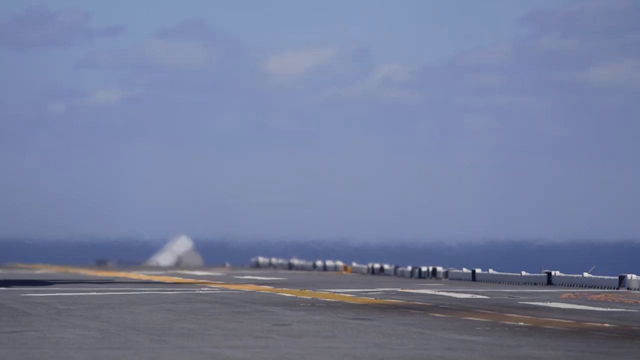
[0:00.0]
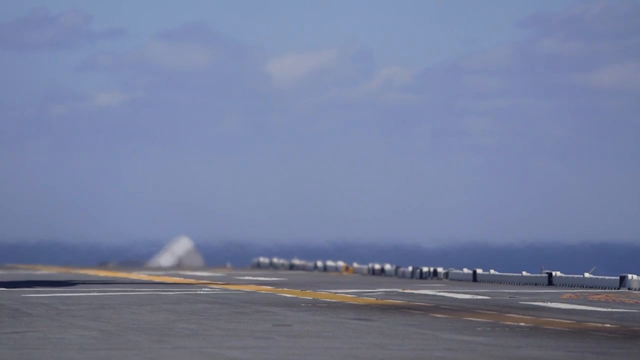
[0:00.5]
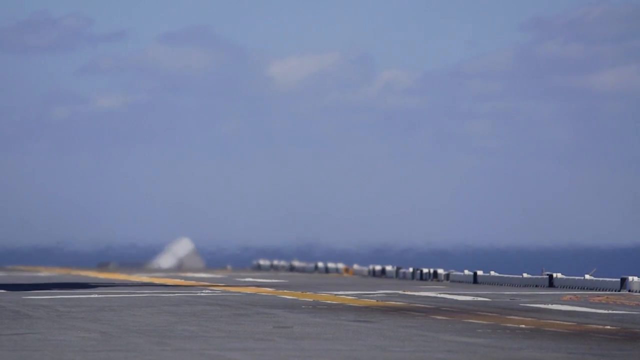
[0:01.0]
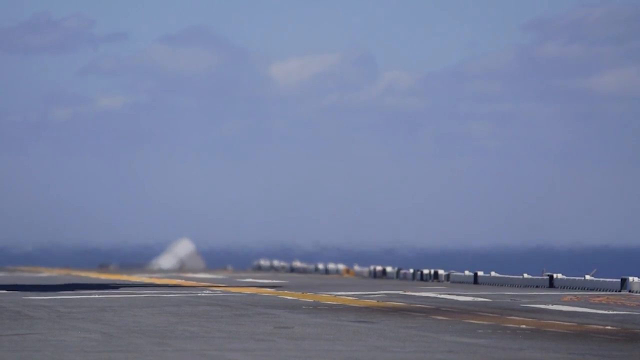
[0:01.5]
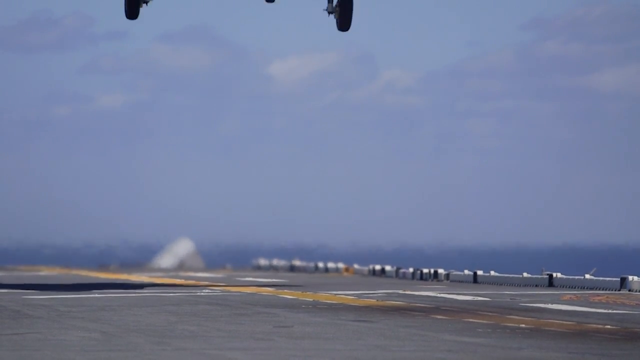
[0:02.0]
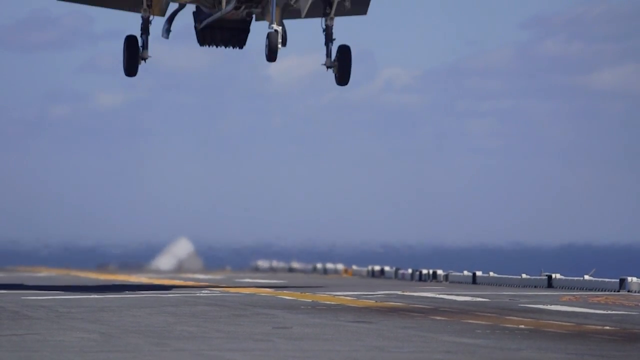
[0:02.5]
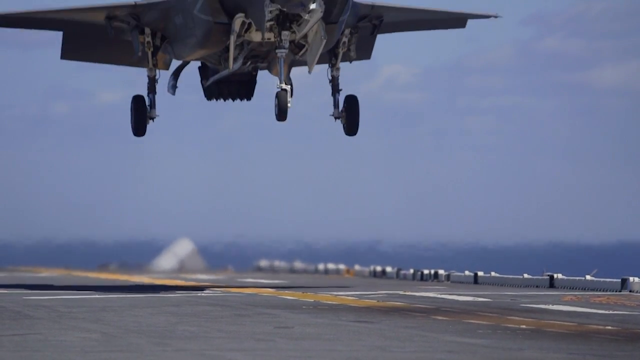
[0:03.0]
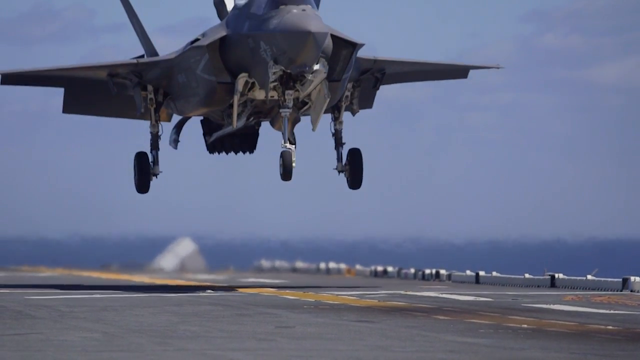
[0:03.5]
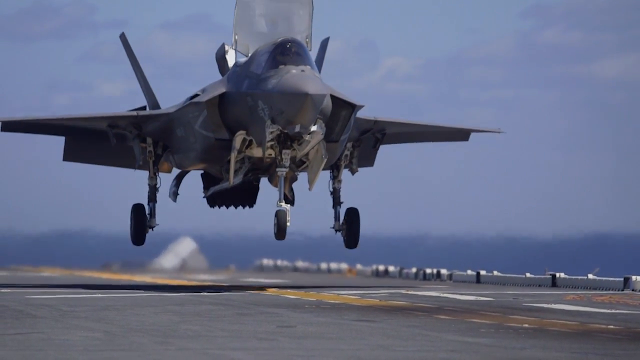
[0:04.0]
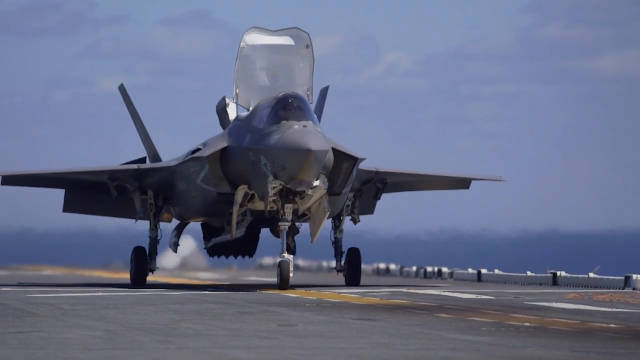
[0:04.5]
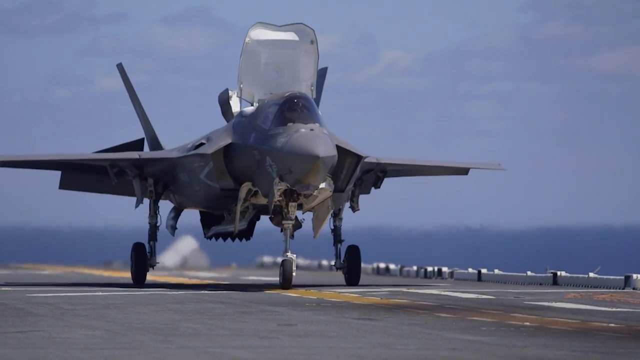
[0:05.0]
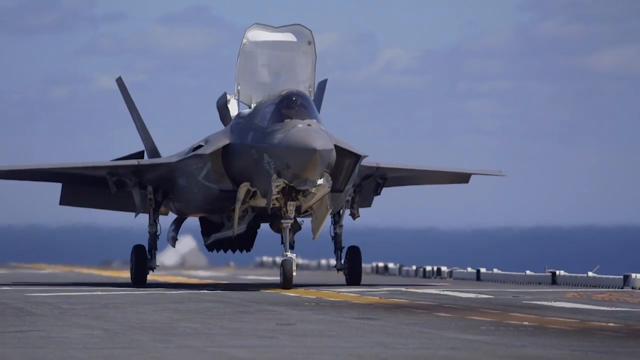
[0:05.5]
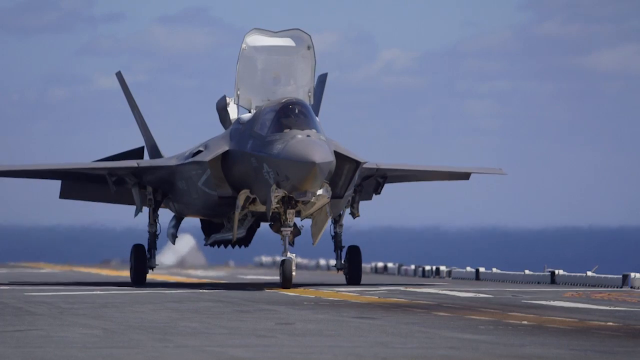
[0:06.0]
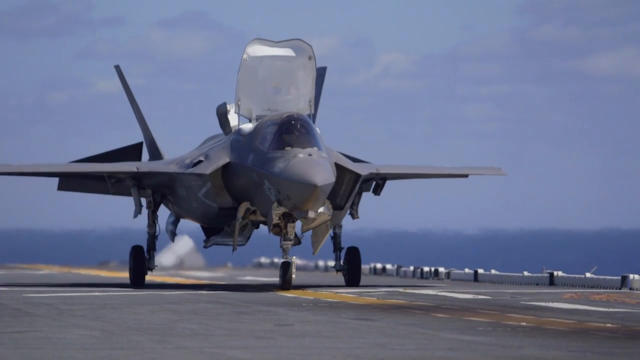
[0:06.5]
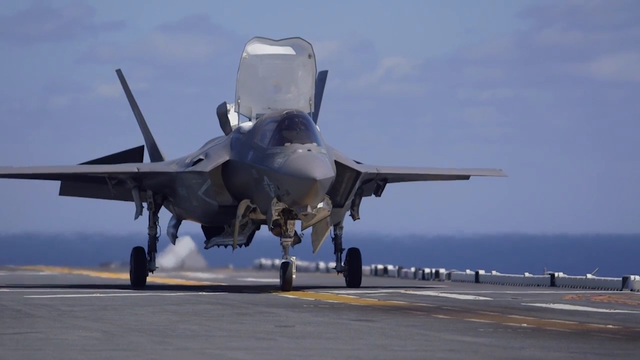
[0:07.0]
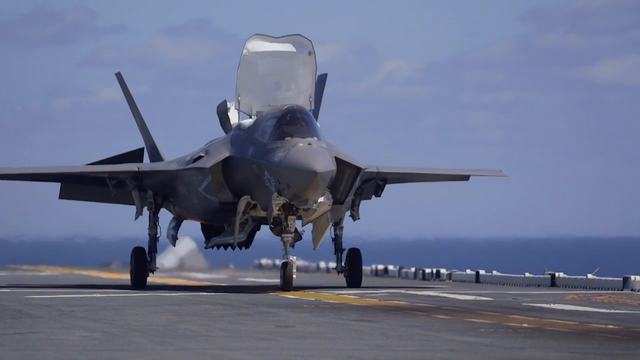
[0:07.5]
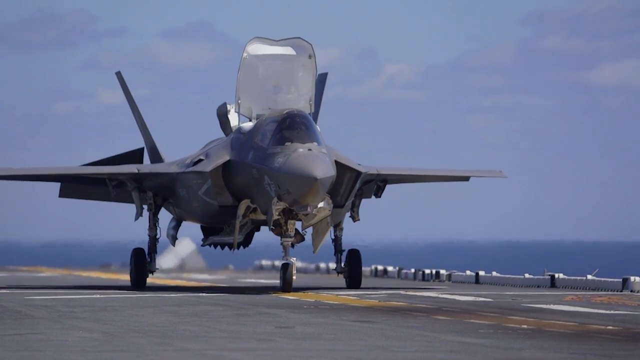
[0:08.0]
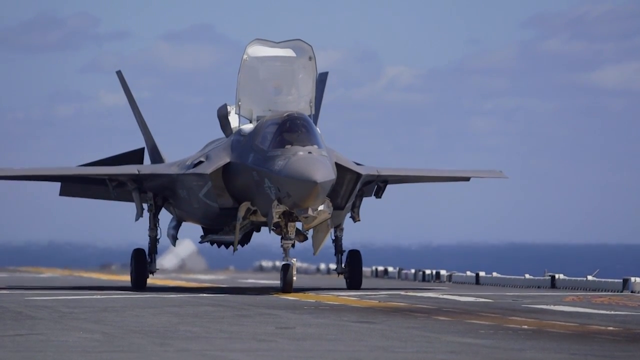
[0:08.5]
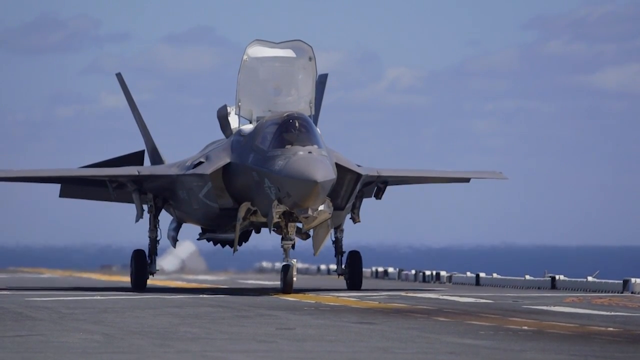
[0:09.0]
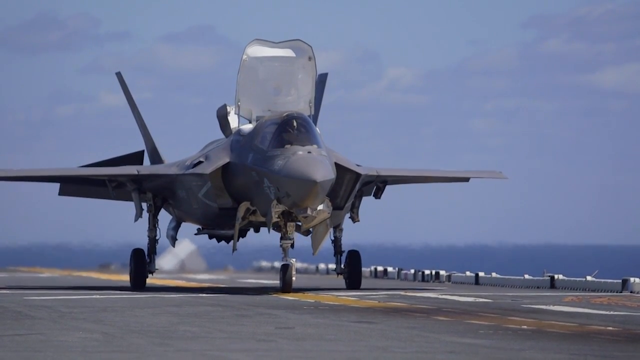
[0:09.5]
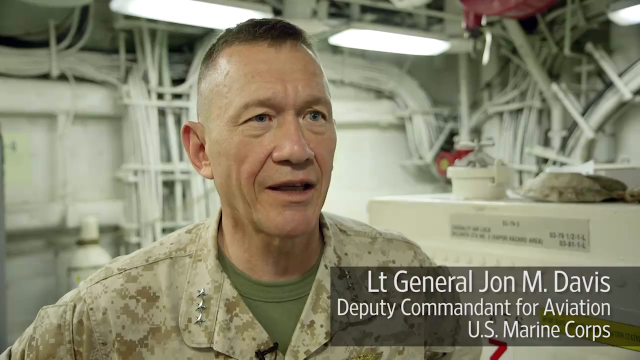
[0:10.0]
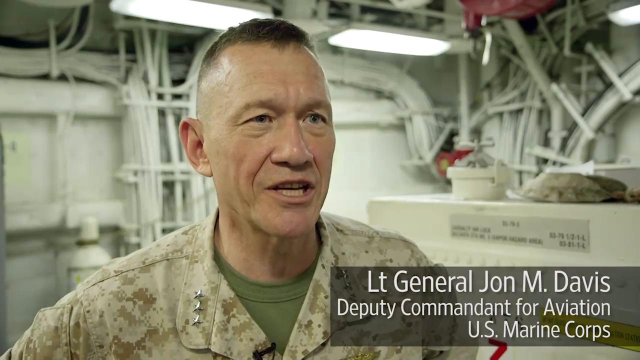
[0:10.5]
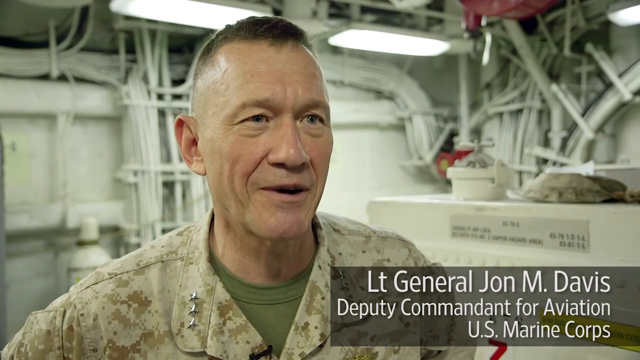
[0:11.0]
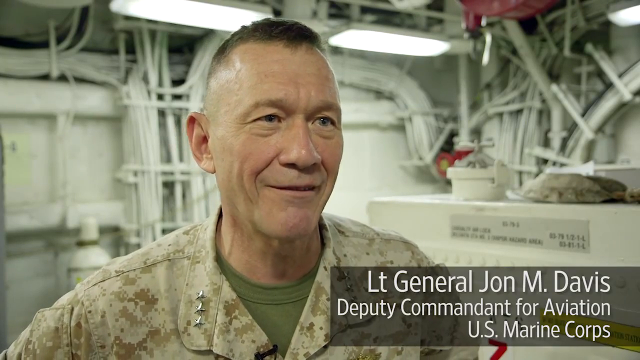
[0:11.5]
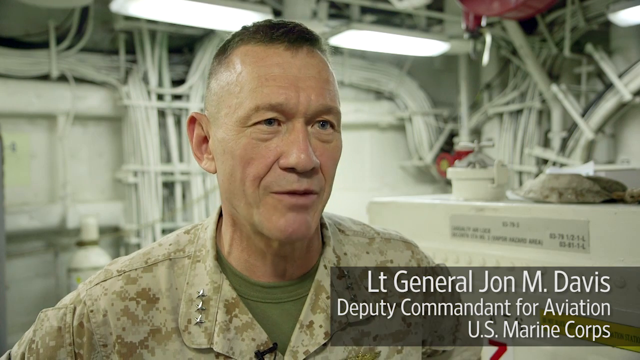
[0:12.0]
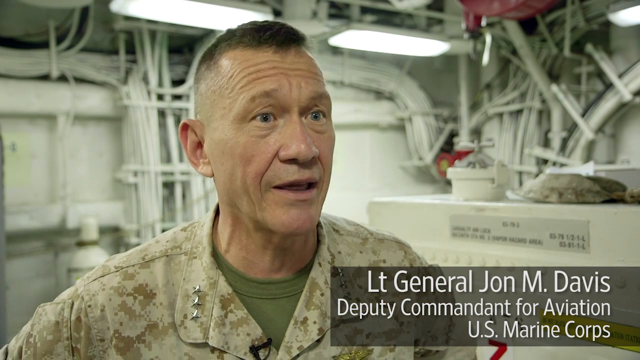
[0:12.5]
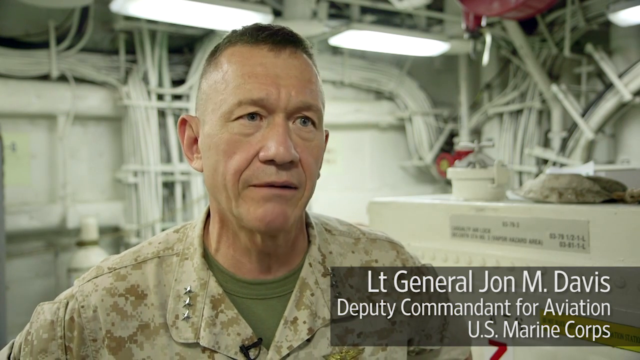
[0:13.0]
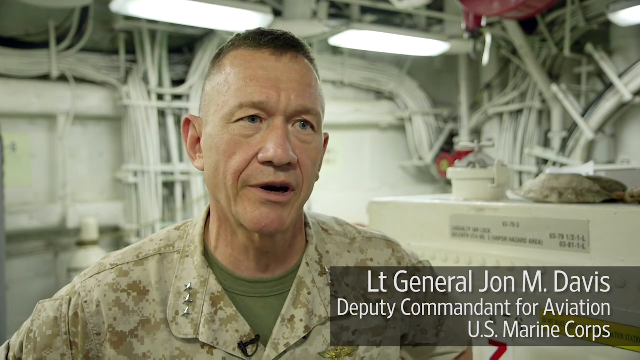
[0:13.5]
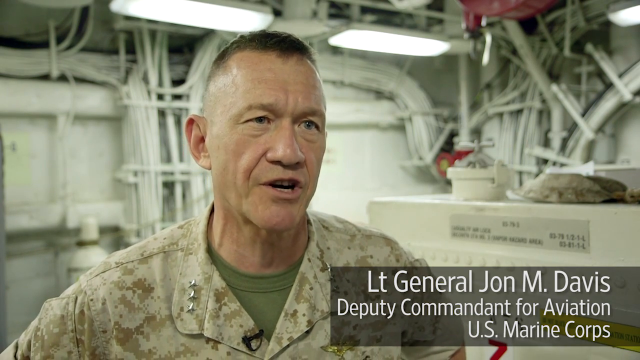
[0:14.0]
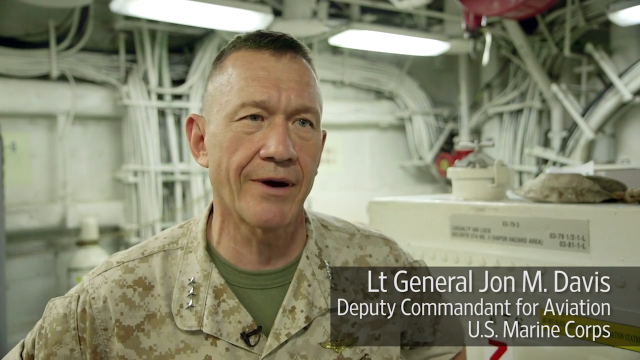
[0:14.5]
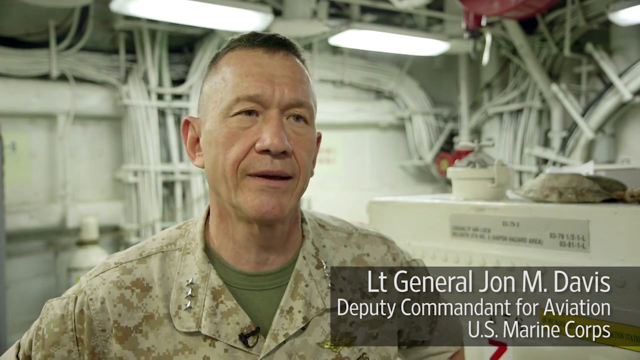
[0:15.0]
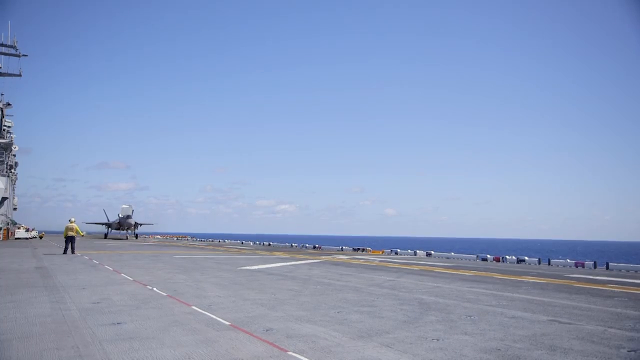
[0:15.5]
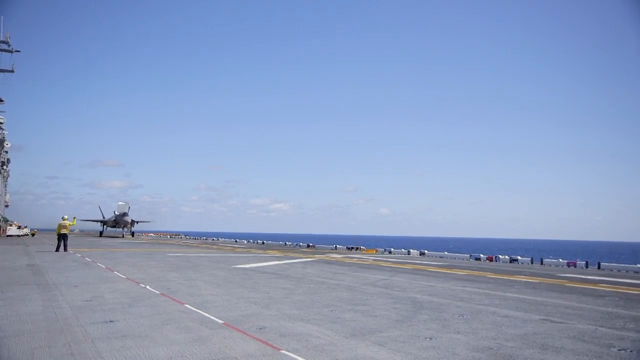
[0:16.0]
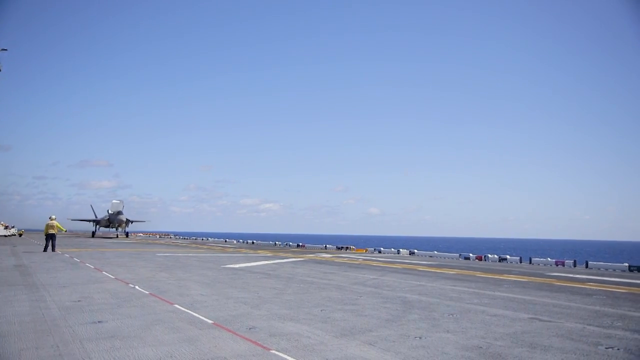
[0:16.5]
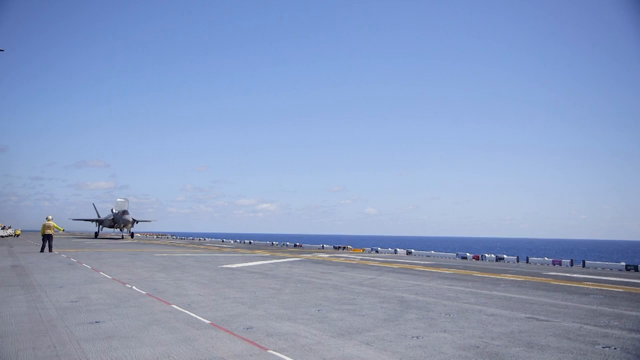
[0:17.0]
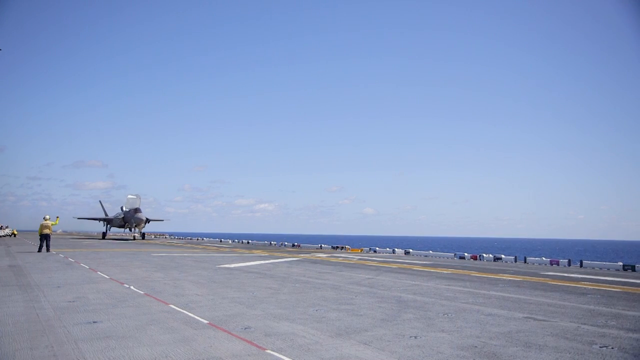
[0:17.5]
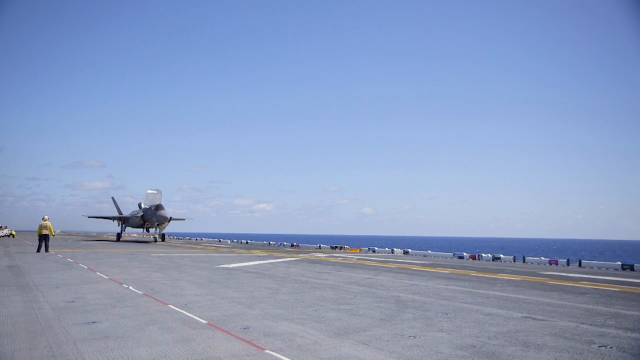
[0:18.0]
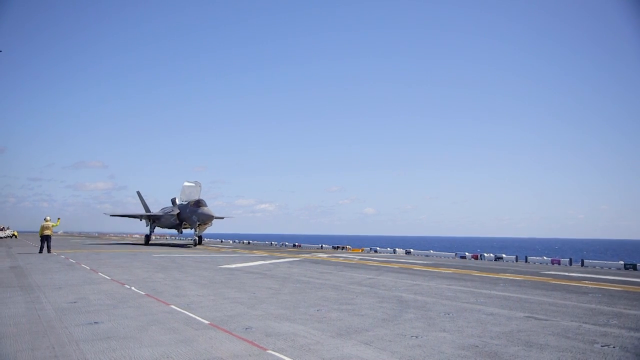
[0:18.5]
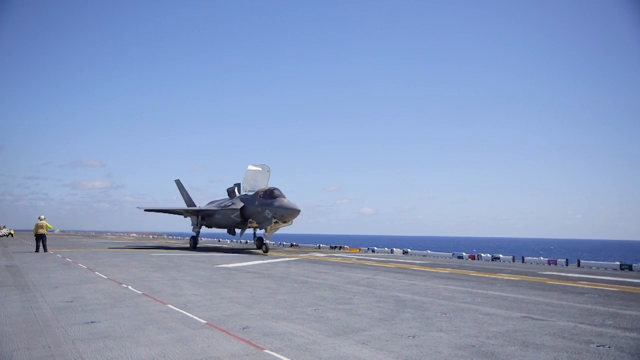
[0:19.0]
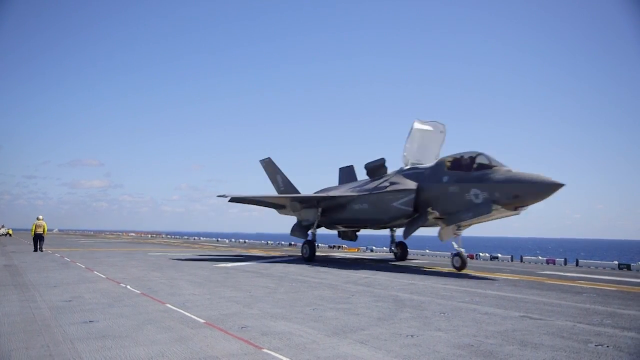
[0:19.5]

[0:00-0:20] The flight deck of an air carrier is shown, and a jet comes in from the top and makes a perfect landing on it. In the background are the ocean water and the horizon, with blue sky above. The jet is gray and has landed on the carrier's flight deck. The scene changes to a man who is being interviewed and talking. In the bottom right corner, his name and credentials appear: "Lieutenant General", "John M. Davis", "Deputy Commandant for Aviation, U.S. Marine Corps". He wears an Army uniform with three gold stars on both collars, has short brown hair, and looks to the right as he speaks. He looks like he is in the inner part of a ship. A different scene of a carrier's flight deck follows. A person on the left side, wearing a helmet, a yellow jacket and black pants, is waving at the carrier. A jet then takes off from the carrier, moving very fast and passing by to the right as it takes off.